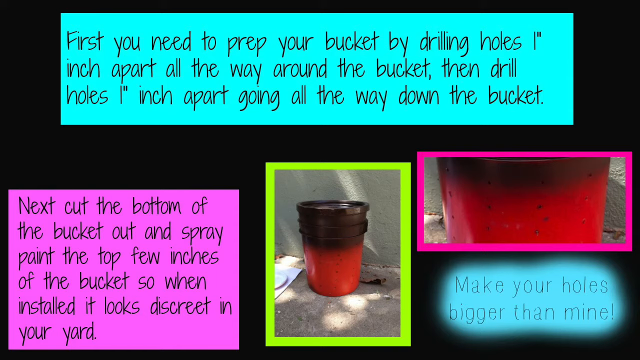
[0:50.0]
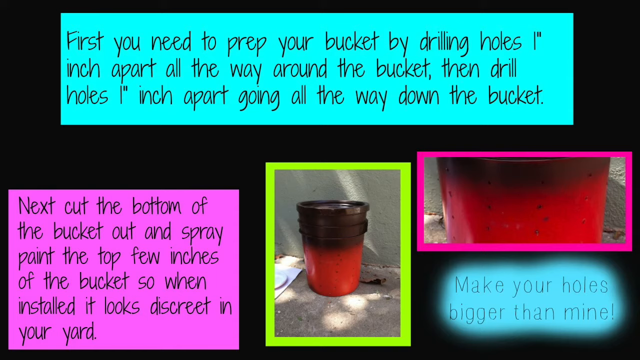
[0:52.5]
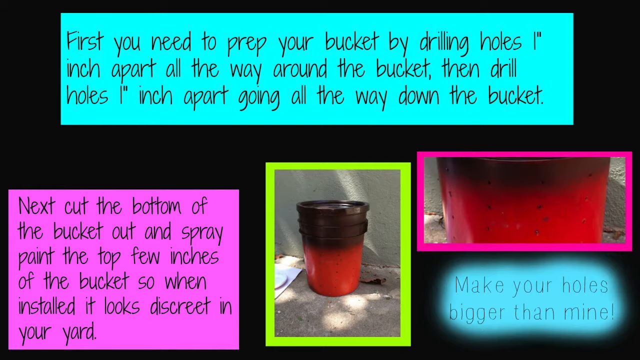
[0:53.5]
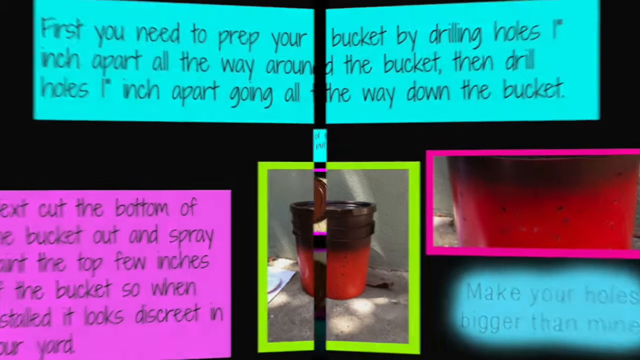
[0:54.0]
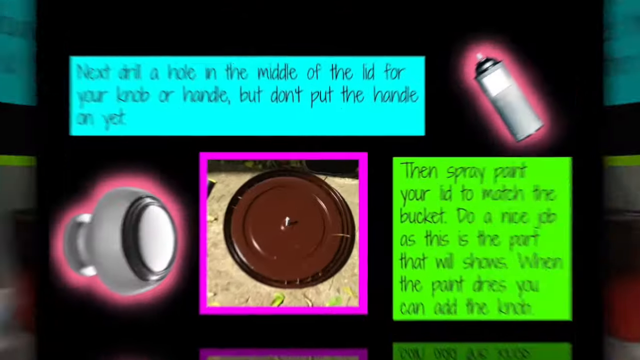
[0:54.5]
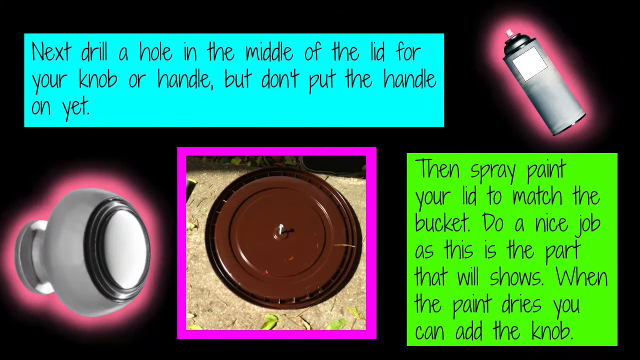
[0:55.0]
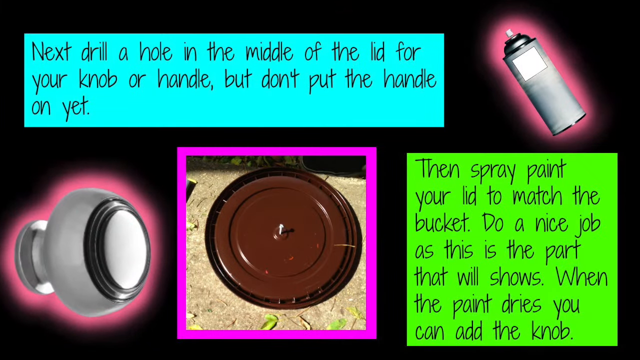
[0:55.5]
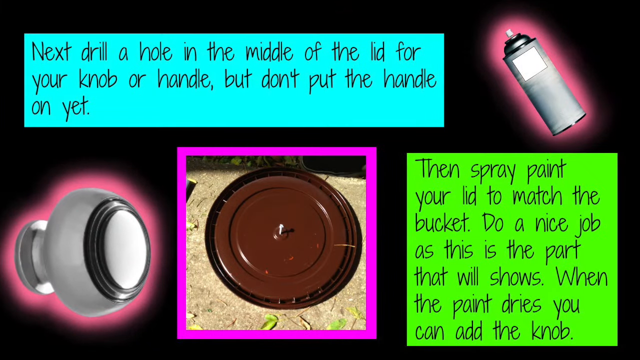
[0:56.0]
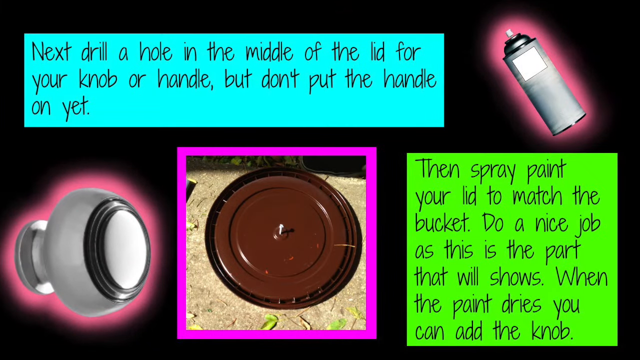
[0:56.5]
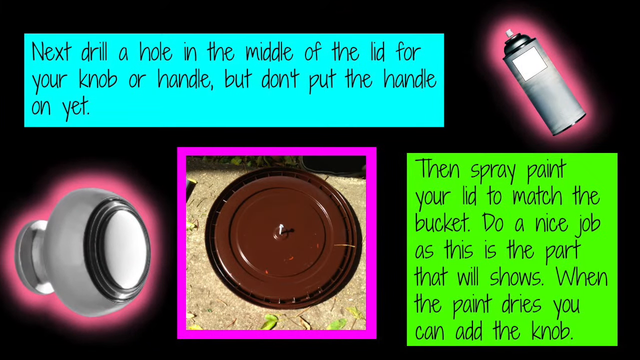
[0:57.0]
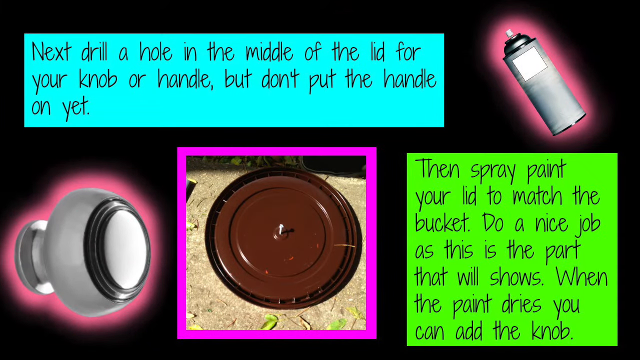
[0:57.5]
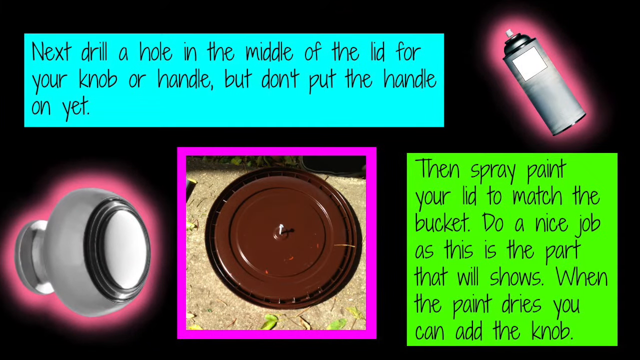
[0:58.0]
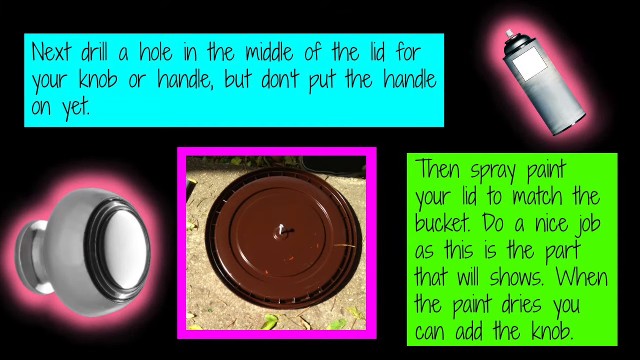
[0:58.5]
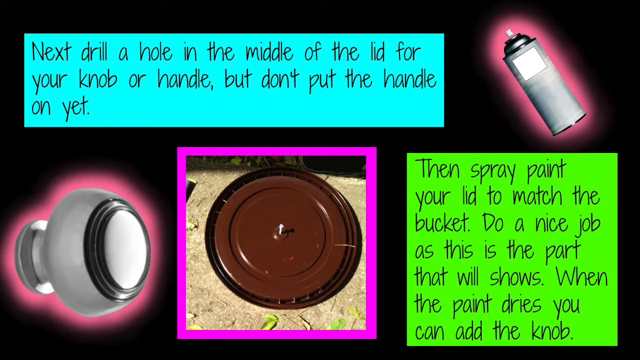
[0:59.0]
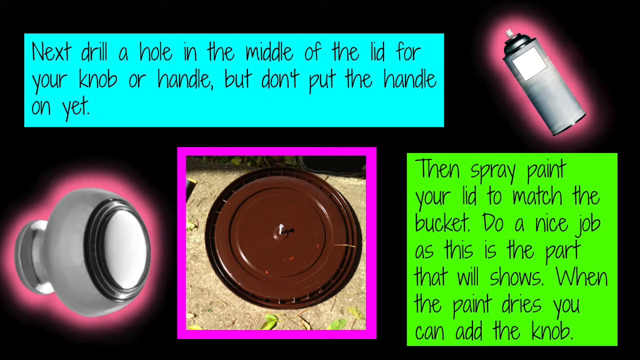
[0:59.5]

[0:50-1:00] A camera transition leads to a new slide of instructions with five pieces of information. Black text on a blue background reads "next drill a hole in the middle of the lid for your knob or handle but don't put the handle on yet." In the top right is a can of spray paint on a pink background. In the bottom left is what looks like a knob or handle, also on a pink background. In the bottom middle, a picture on a pink background shows a brown lid on the concrete floor with a screw or a hole in the middle of it. In the bottom right, black text on a green background reads "then spray paint your lid to match the bucket. Do a nice job as this is the part that will show. When the paint dries you can add the knob."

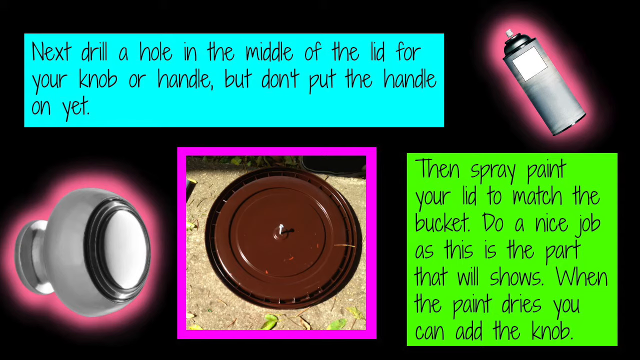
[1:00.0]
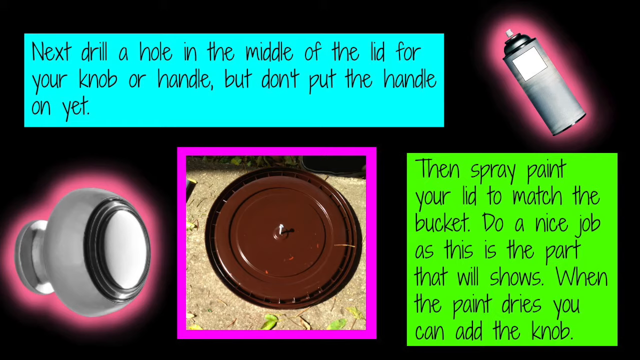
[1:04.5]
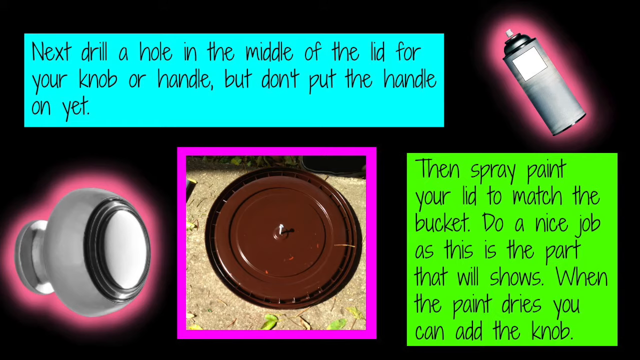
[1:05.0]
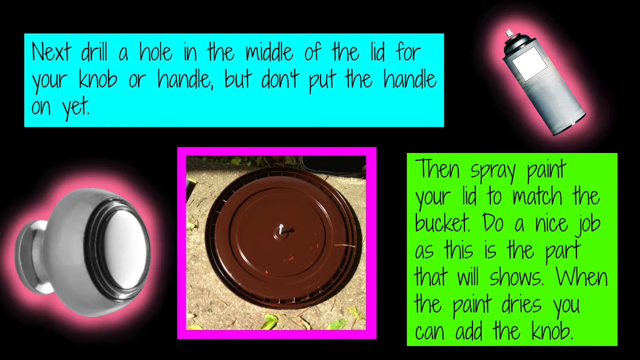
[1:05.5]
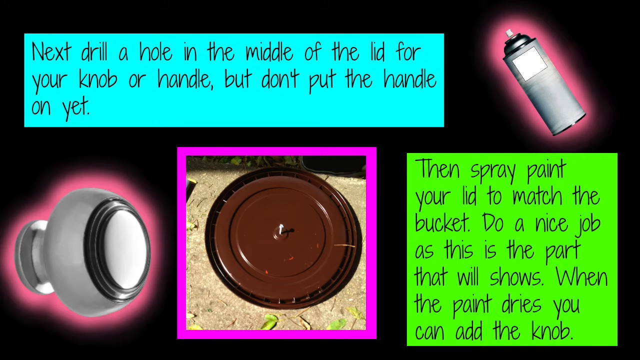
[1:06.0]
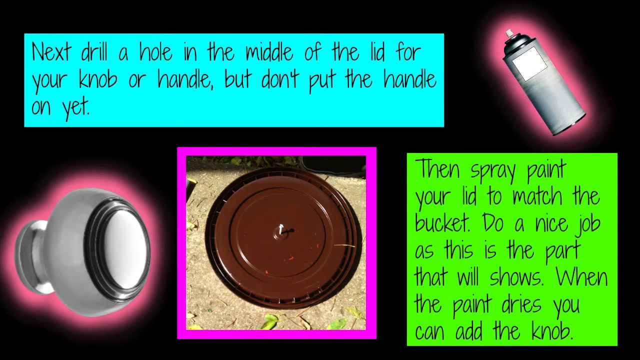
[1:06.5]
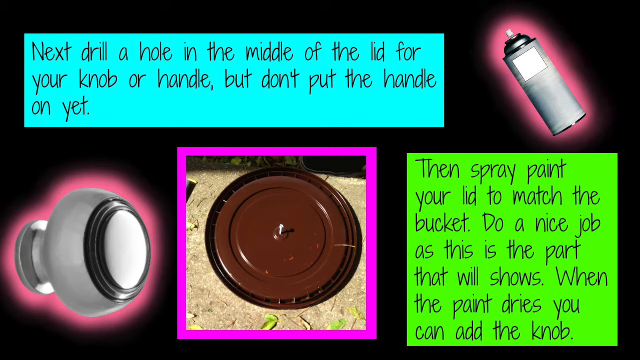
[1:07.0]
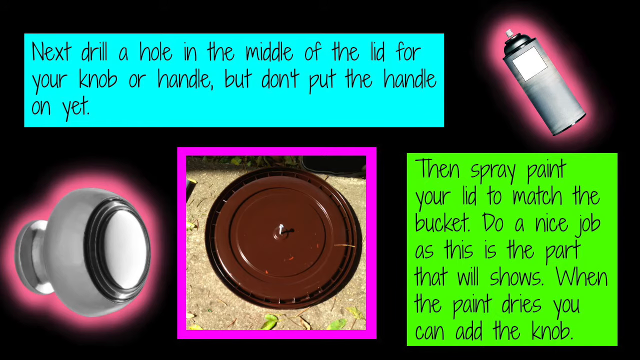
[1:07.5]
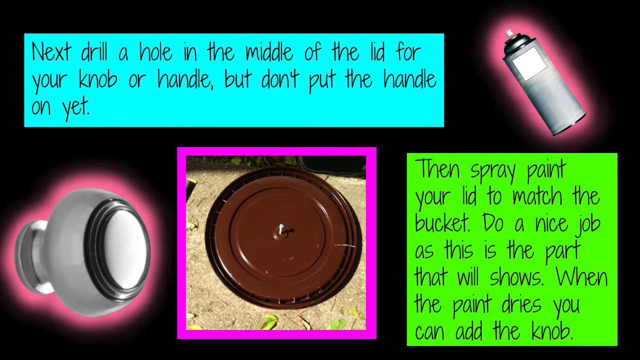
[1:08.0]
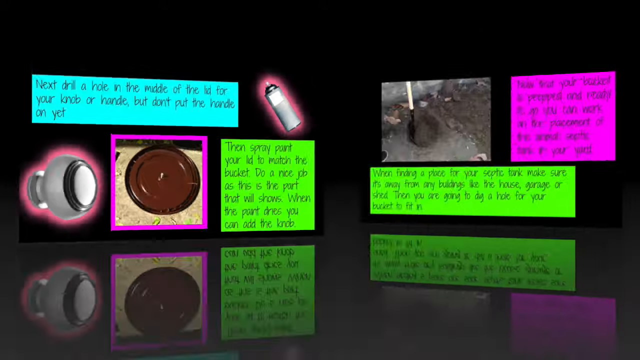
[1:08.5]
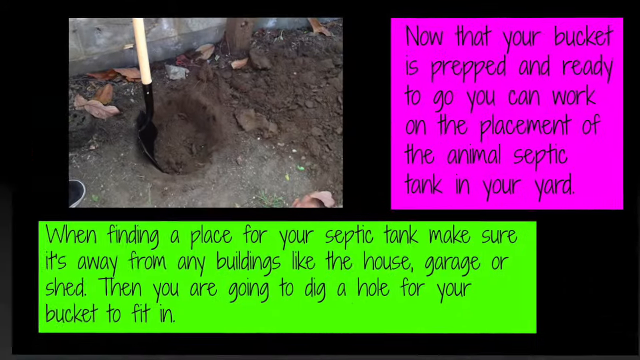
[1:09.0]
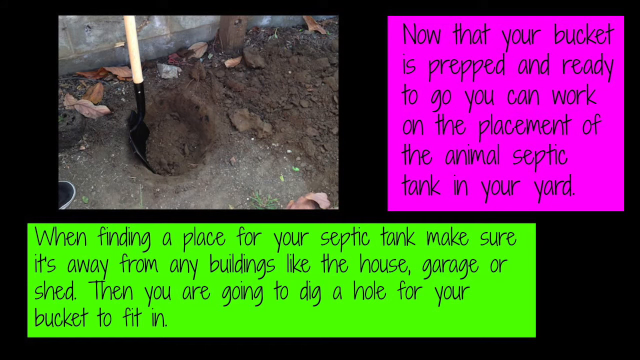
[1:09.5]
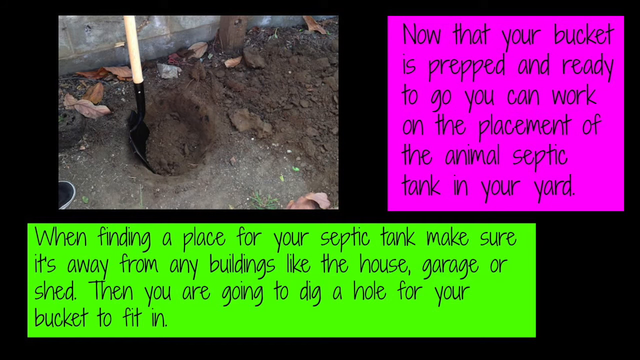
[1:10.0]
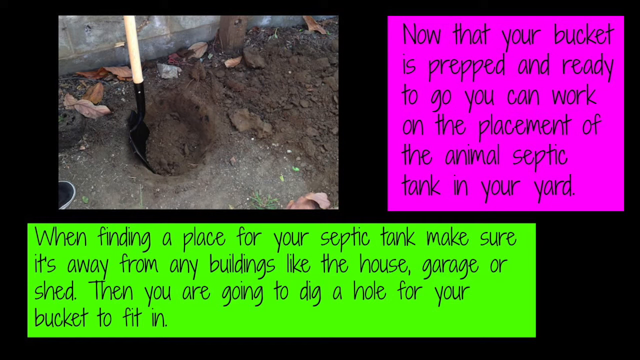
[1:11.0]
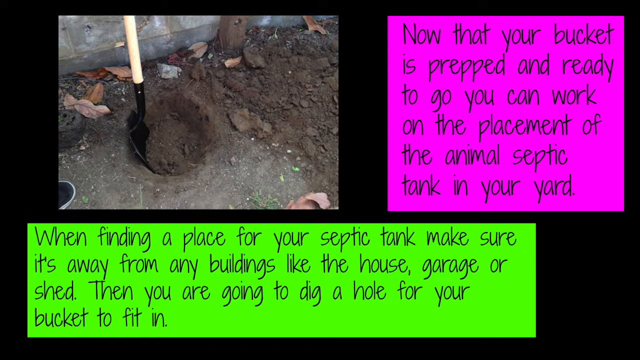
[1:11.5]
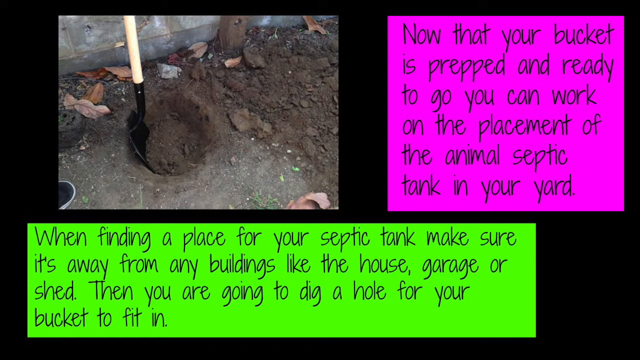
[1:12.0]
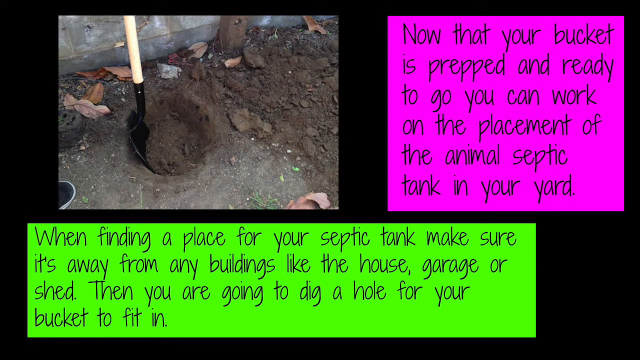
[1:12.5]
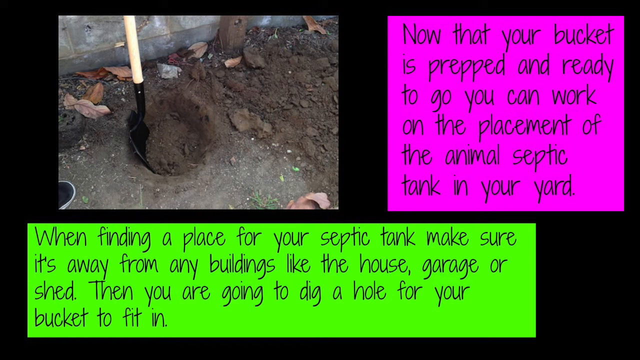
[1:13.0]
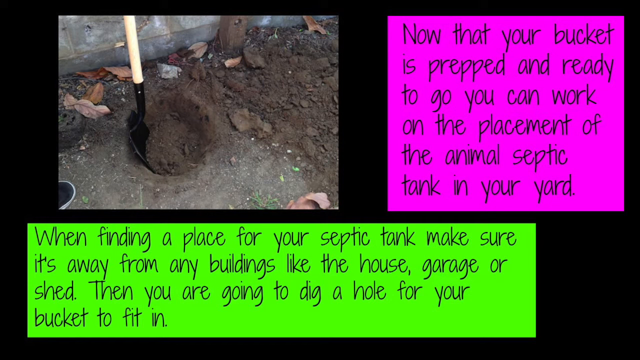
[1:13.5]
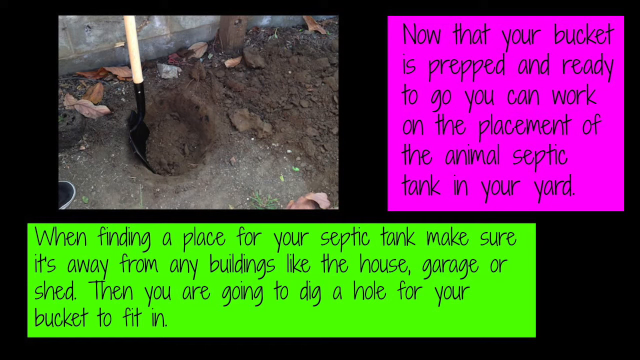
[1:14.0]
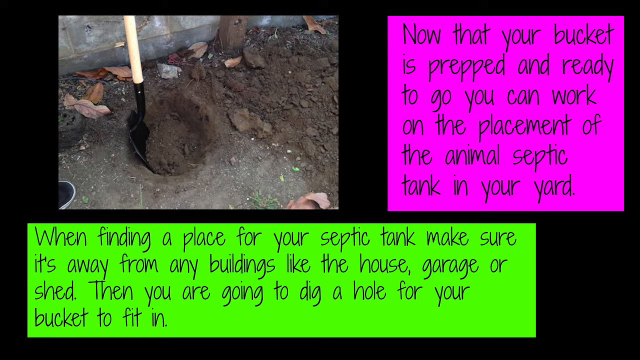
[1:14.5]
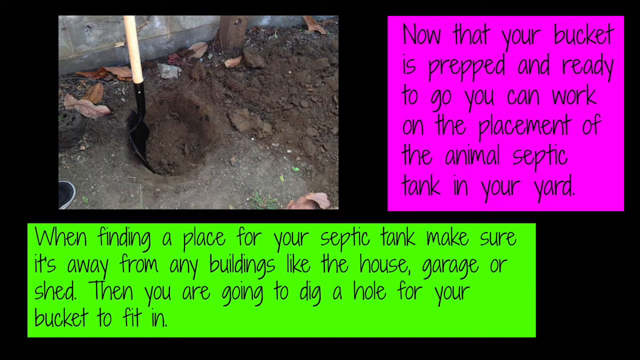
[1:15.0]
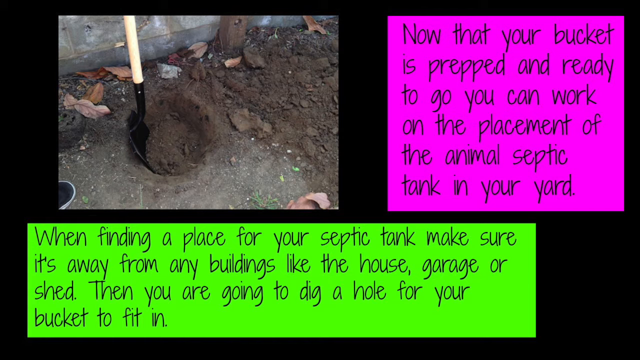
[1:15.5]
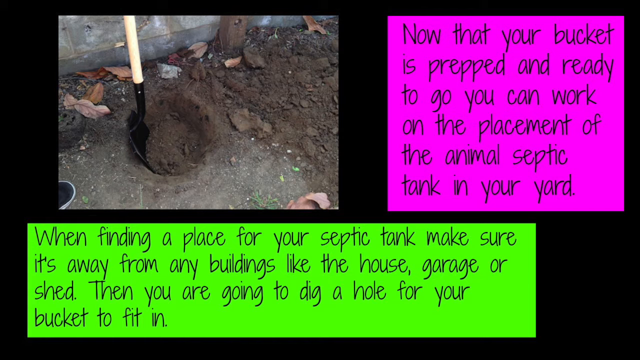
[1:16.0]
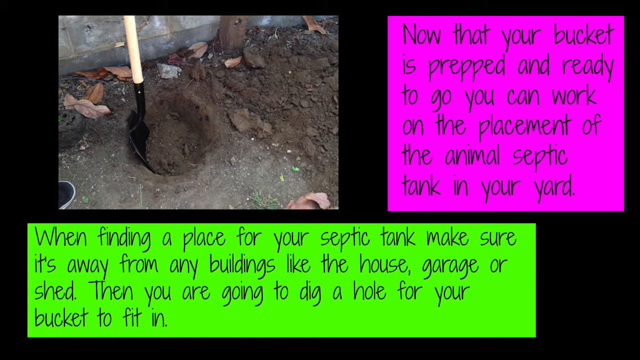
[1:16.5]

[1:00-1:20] After a transition, a slide shows three more pieces of instructions. In the top left is a photo of a hole dug in the soil, with a black spade with a wooden handle in the hole and some dirt in it. Pieces of dirt surround the hole, there are some leaves in the background, and there is a wall at the back. In the top right, text on a pink background reads "Now that your bucket is prepped and ready to go, you can work on the placement of the animal septic tank in your yard." At the bottom, text on a green background reads "When finding a place for your septic tank, make sure it's away from any buildings like the house, garage or shed. Then you are going to dig a hole for your bucket to fit in."